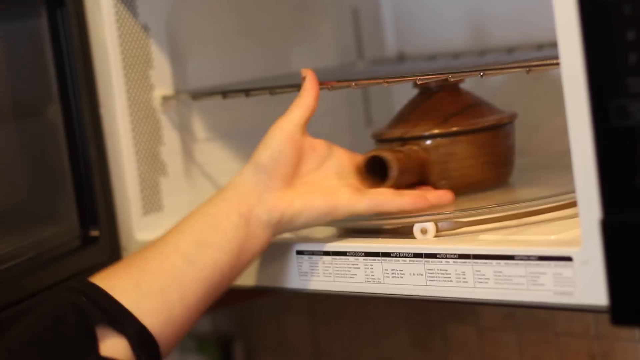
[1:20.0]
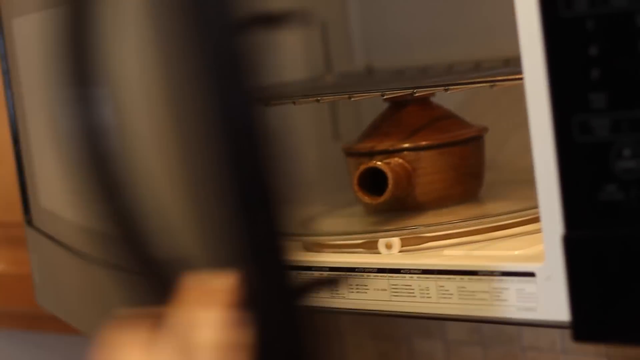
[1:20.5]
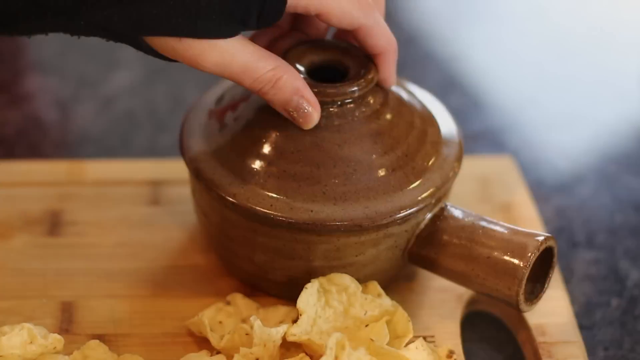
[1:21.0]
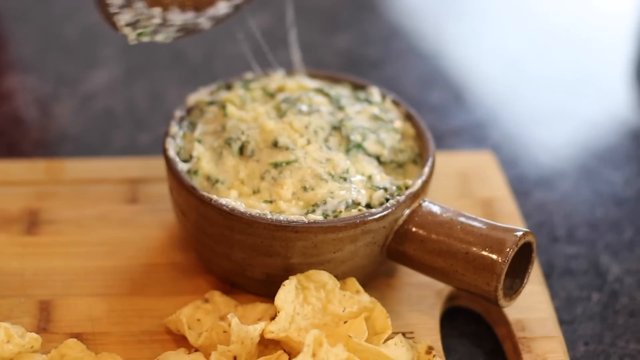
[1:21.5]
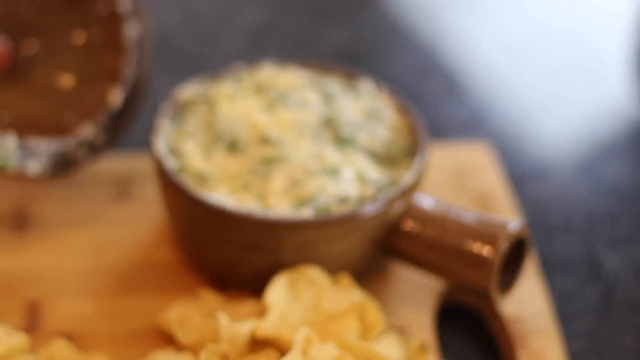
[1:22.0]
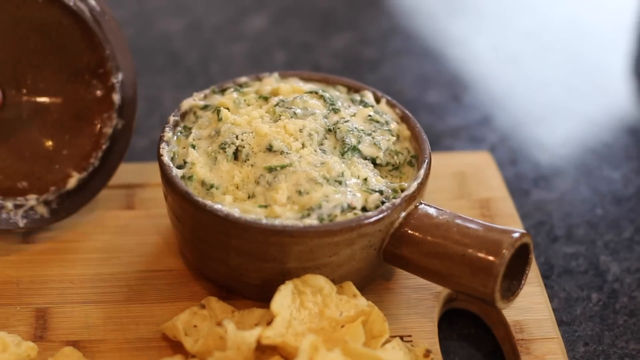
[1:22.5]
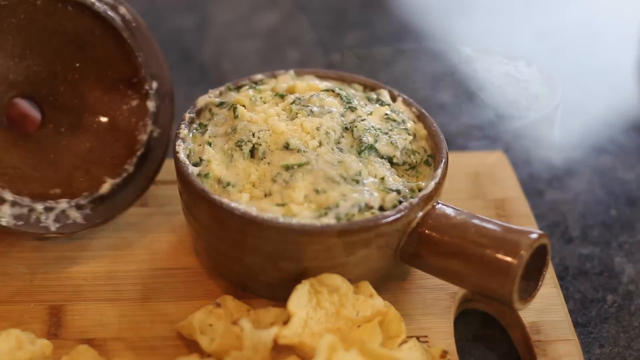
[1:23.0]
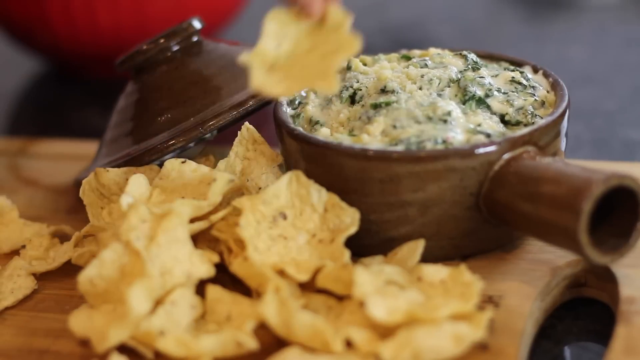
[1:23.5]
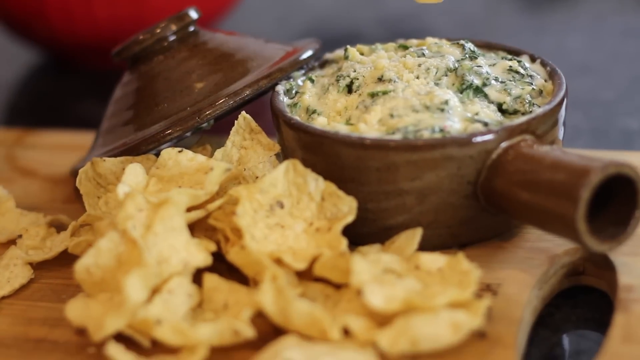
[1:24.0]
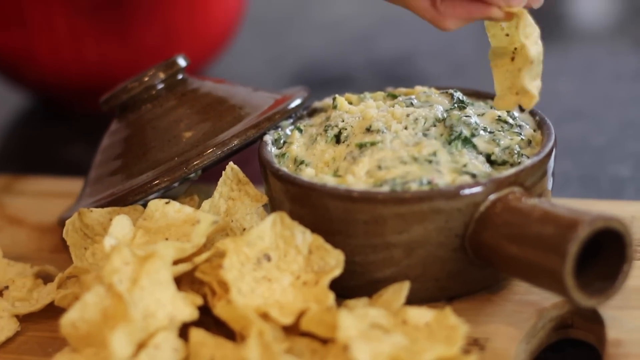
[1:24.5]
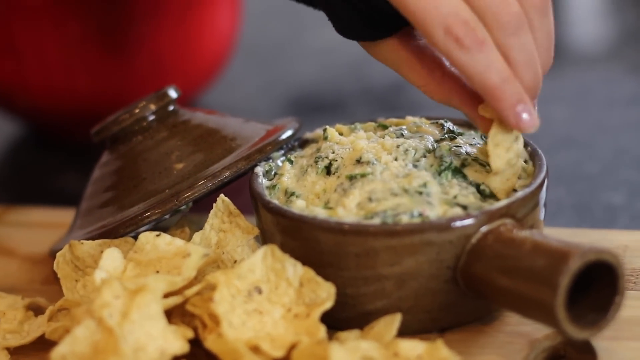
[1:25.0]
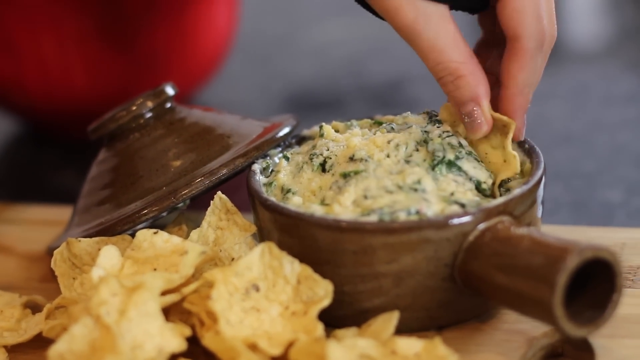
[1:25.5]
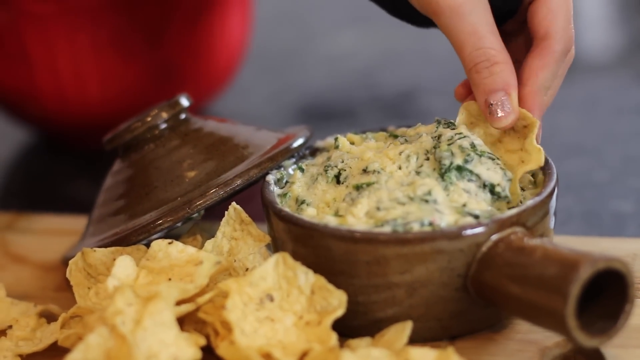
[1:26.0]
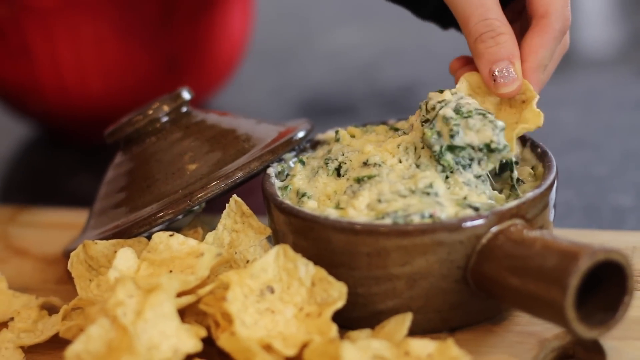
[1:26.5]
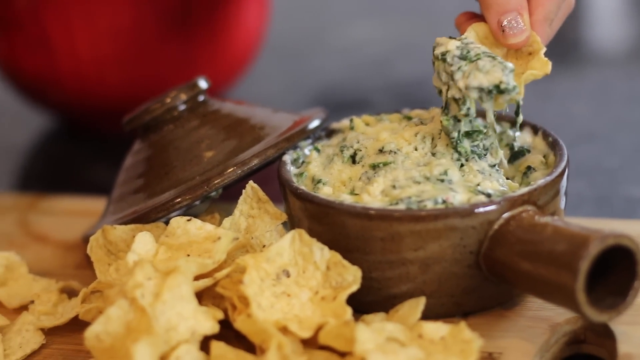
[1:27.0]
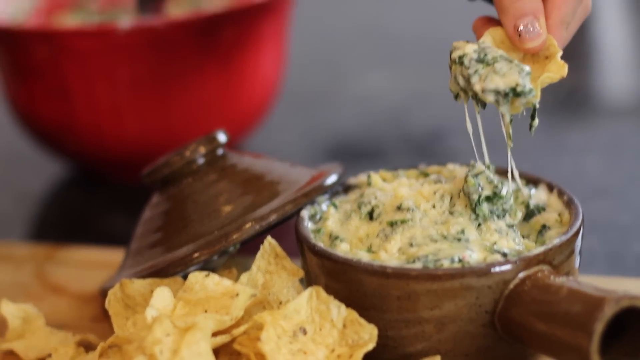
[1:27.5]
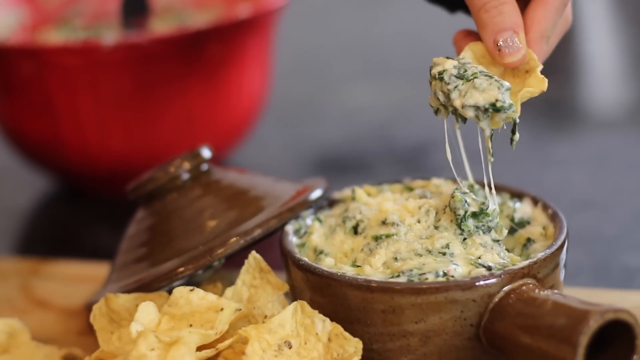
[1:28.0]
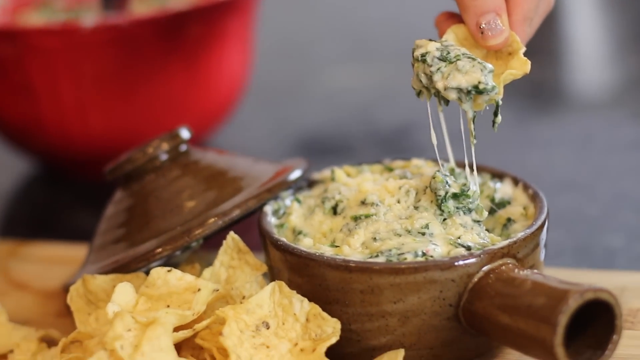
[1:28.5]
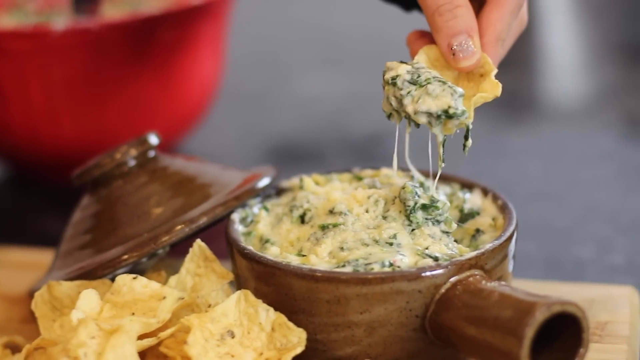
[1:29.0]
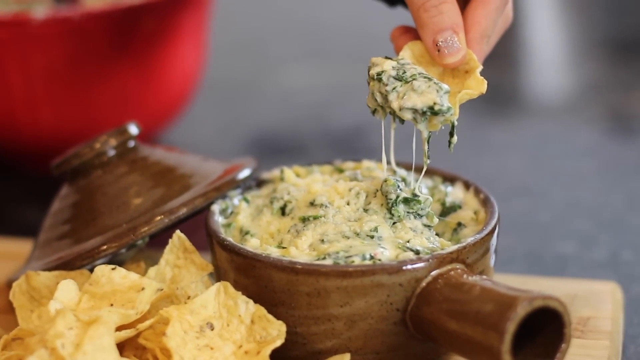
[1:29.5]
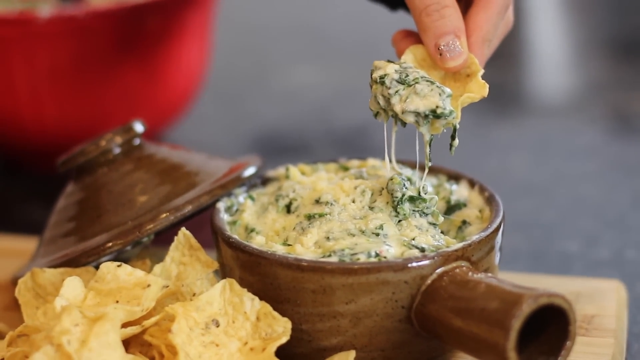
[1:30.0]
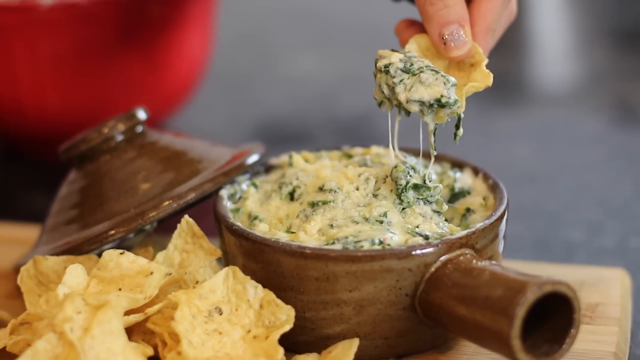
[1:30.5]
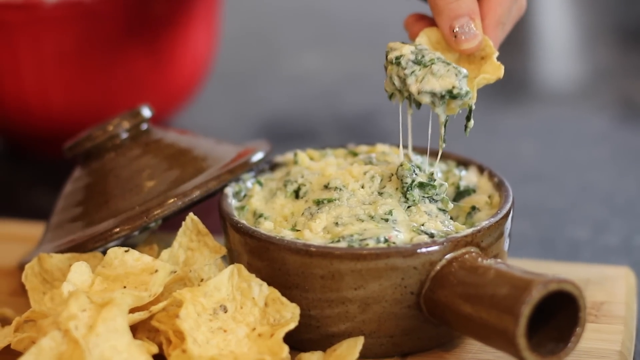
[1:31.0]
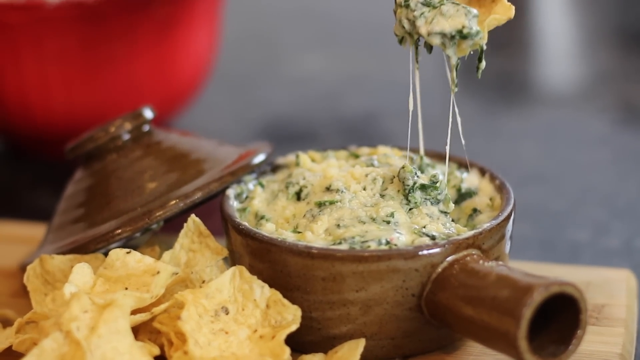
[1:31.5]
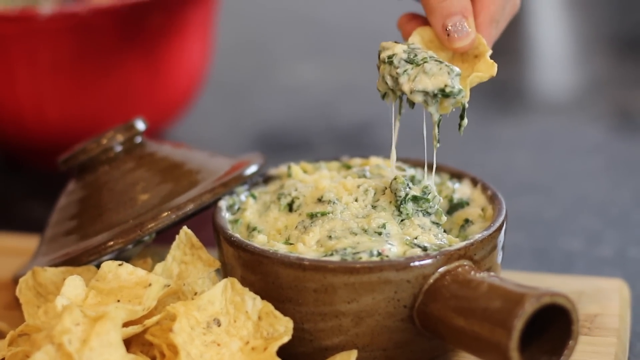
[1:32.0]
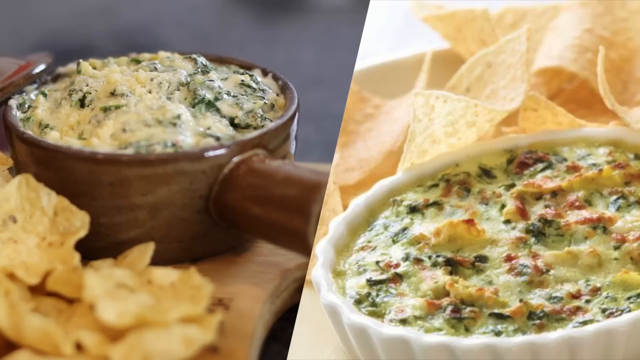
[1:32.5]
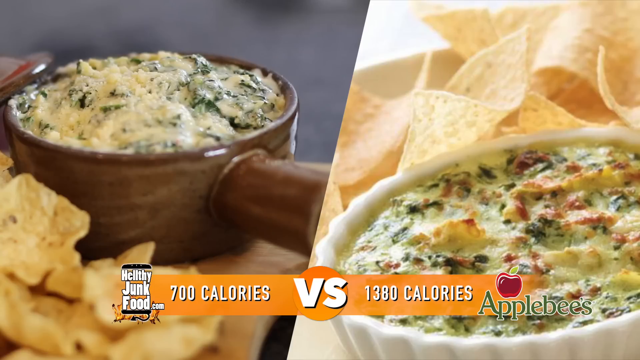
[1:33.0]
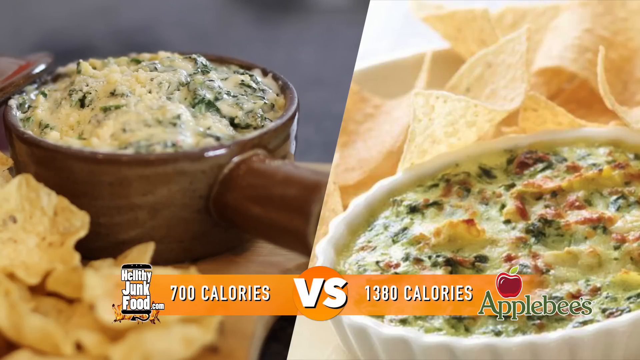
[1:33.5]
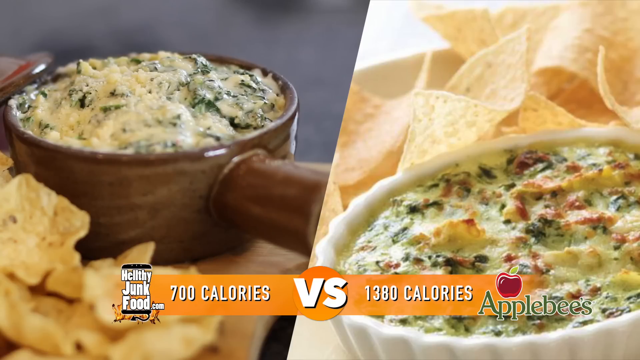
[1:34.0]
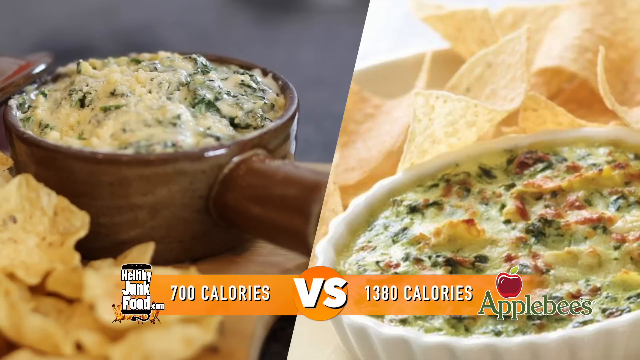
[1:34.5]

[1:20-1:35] Everything is mixed in the red bowl in the kitchen setting, and the cream looks creamy. What looks to be a ceramic pot is shown, with text reading "nonstick microwave safe" and "food slides off"; a bit of steam comes from the top, and the pot is brown. The pink pig is at the bottom right of the screen. An advertisement for the pot, called the Stone Wave, shows text reading "gourmet dishes in minutes stone wave," "as seen on TV" and "stone wave microwave cooker $4.99," apparently its price. The very creamy spinach dip is put into the Stone Wave cooker, and the cooker is placed in the microwave.